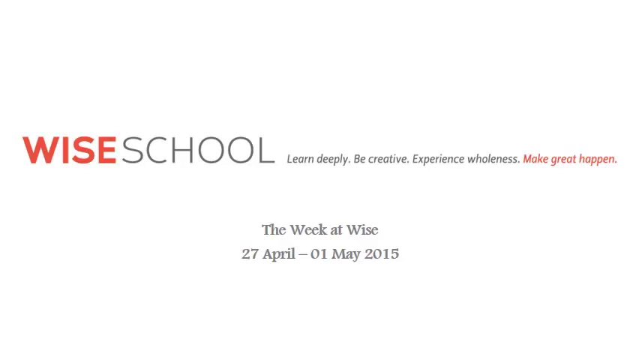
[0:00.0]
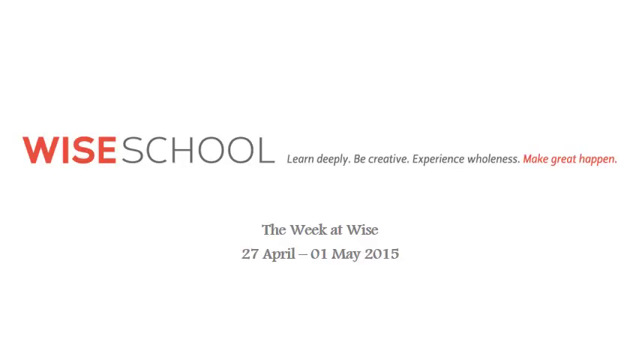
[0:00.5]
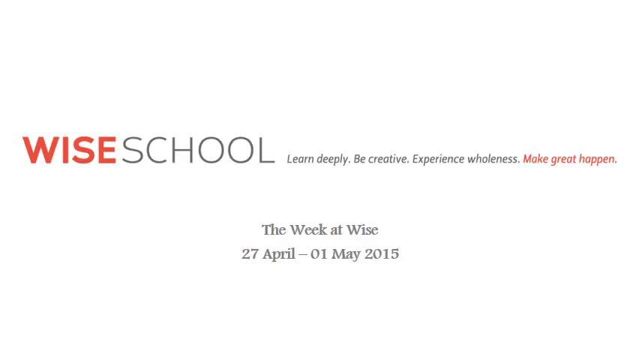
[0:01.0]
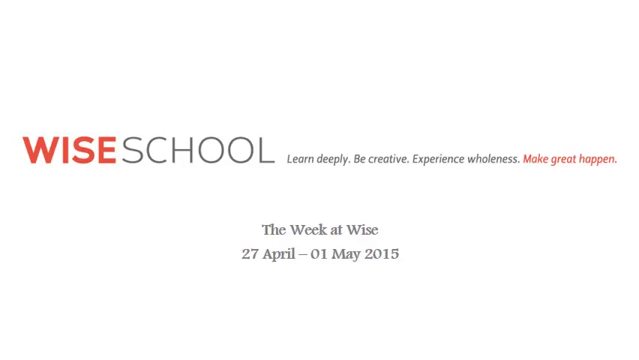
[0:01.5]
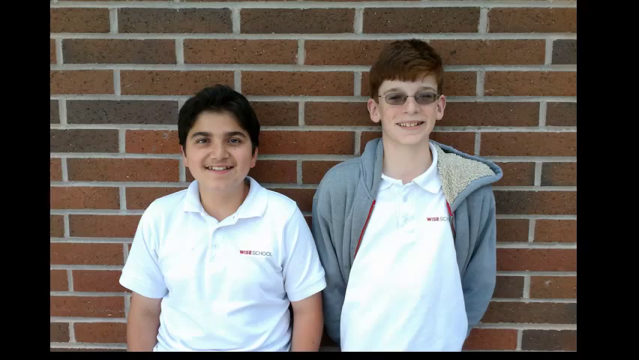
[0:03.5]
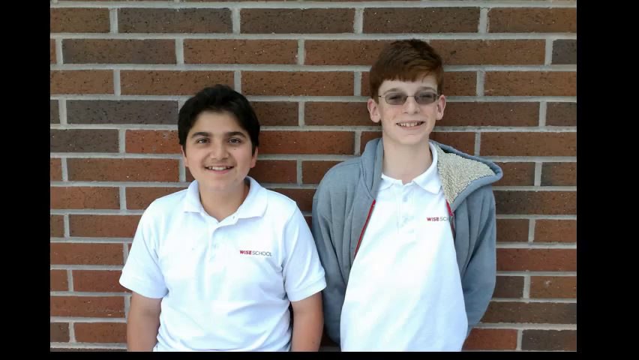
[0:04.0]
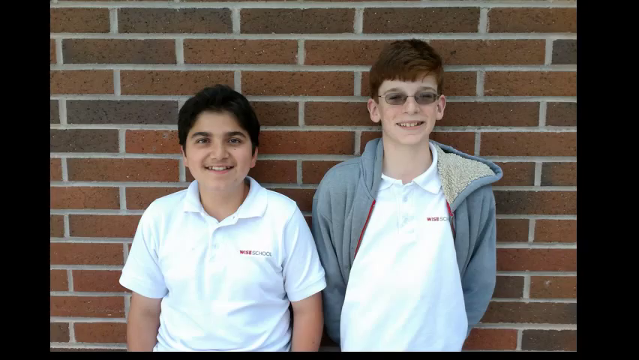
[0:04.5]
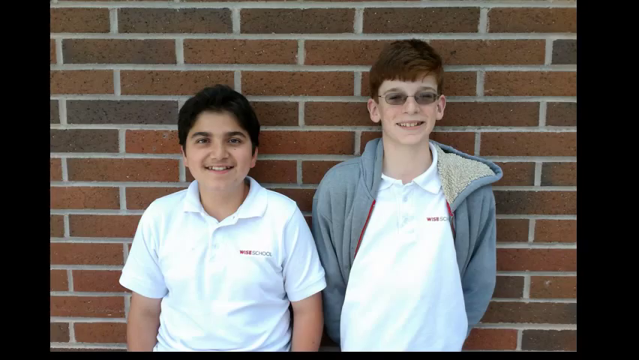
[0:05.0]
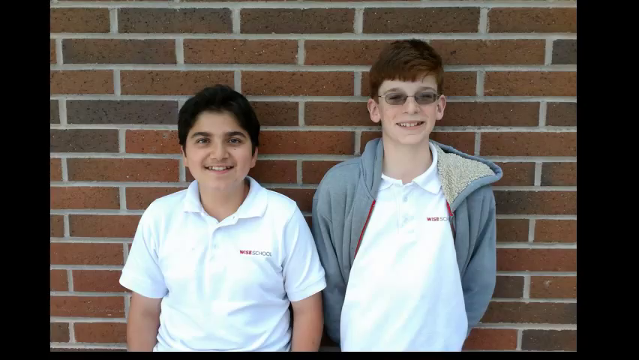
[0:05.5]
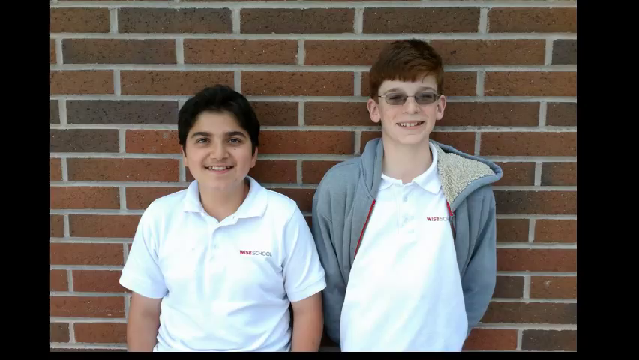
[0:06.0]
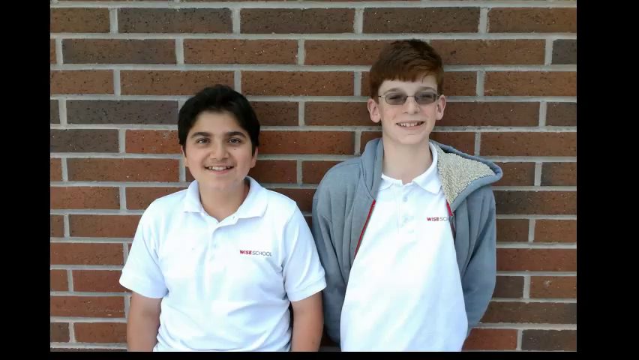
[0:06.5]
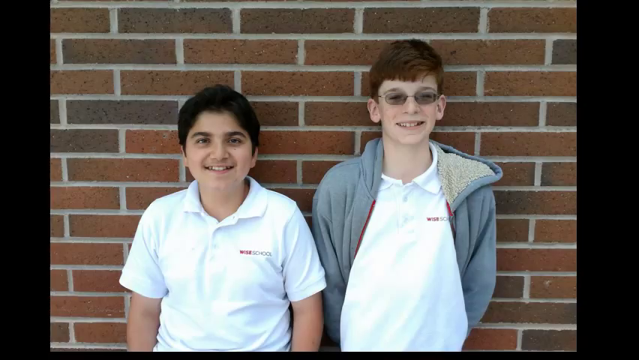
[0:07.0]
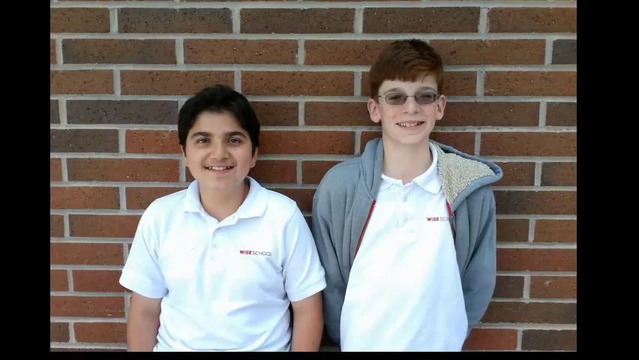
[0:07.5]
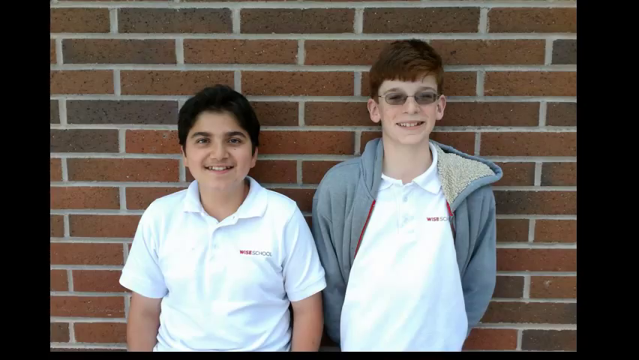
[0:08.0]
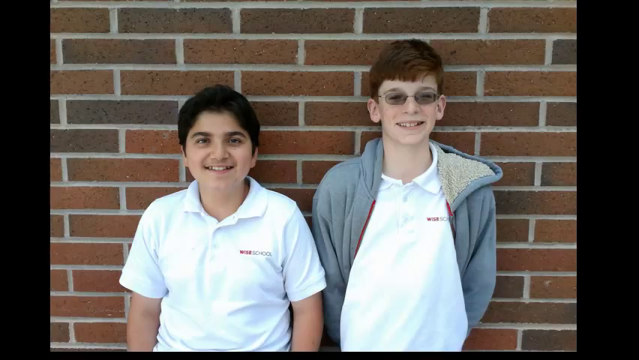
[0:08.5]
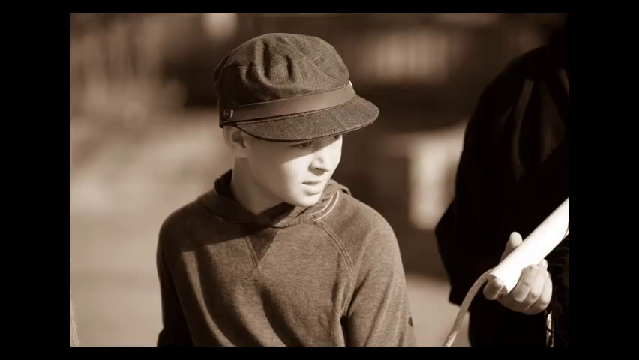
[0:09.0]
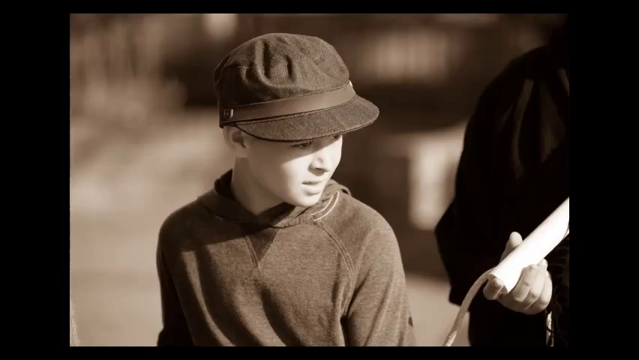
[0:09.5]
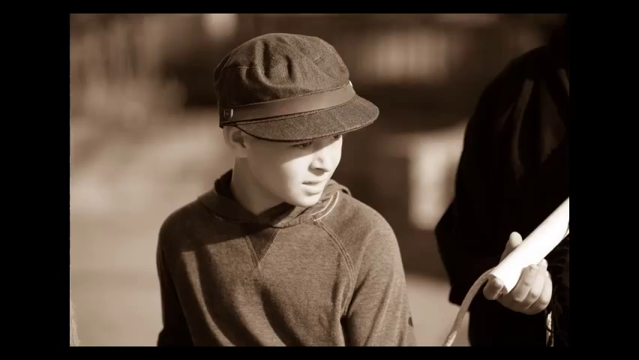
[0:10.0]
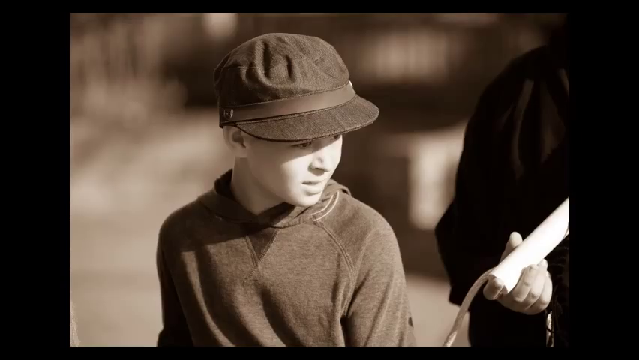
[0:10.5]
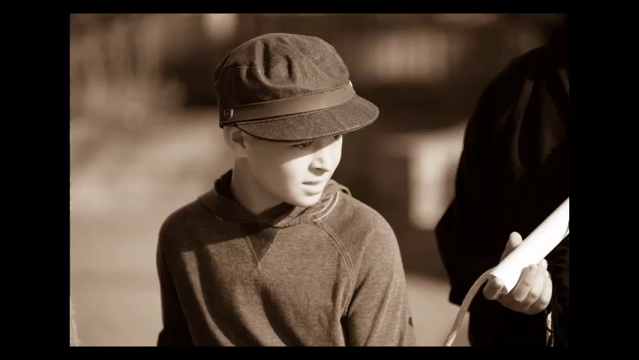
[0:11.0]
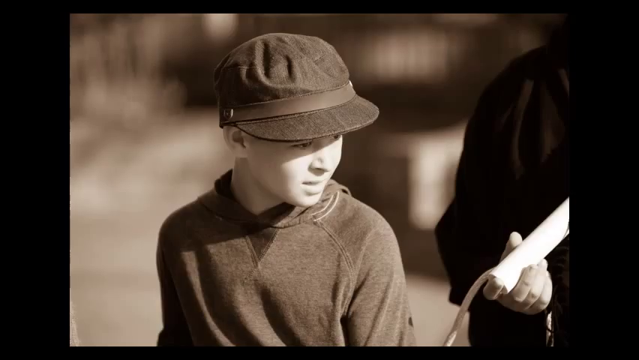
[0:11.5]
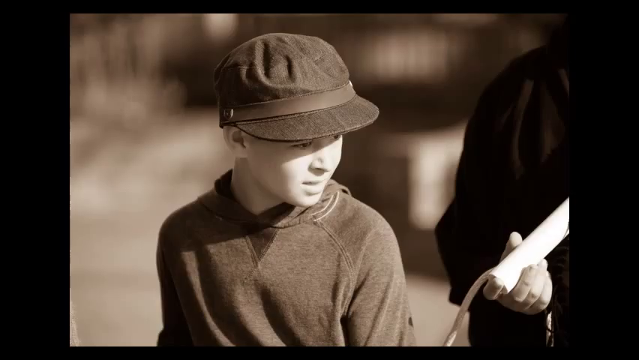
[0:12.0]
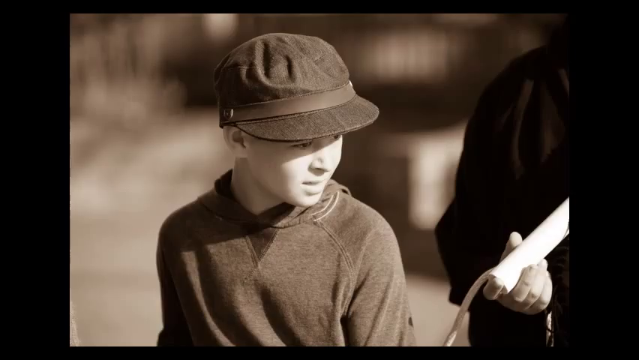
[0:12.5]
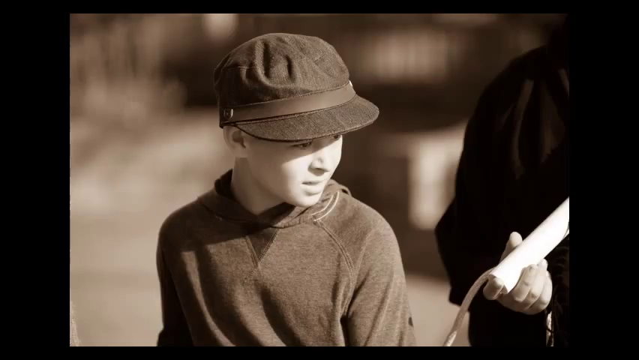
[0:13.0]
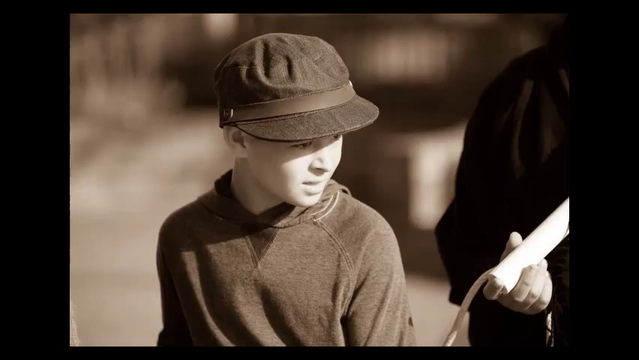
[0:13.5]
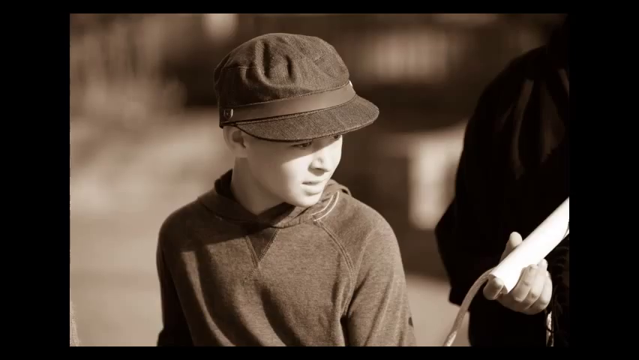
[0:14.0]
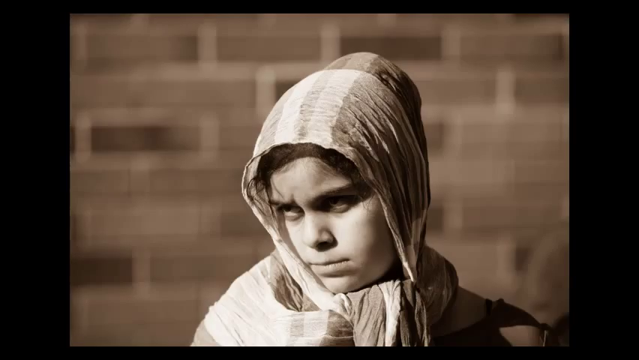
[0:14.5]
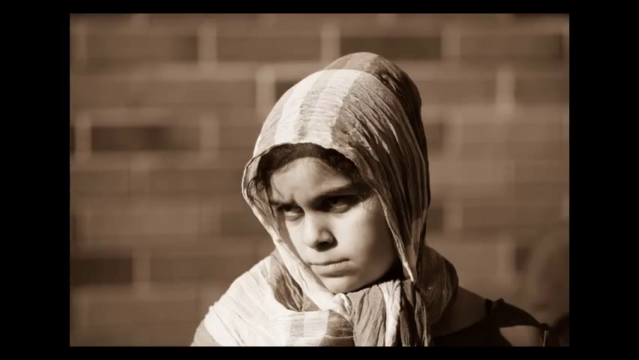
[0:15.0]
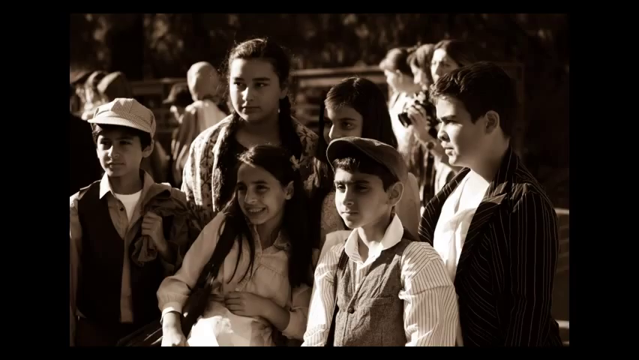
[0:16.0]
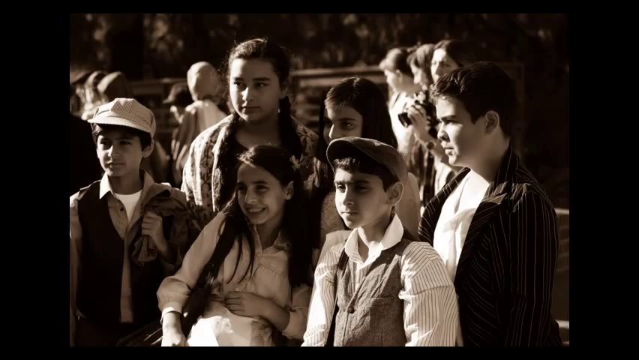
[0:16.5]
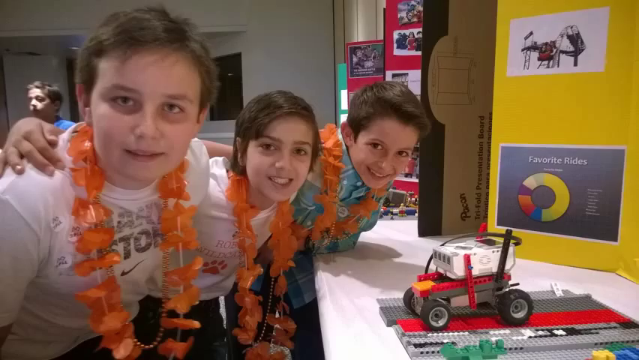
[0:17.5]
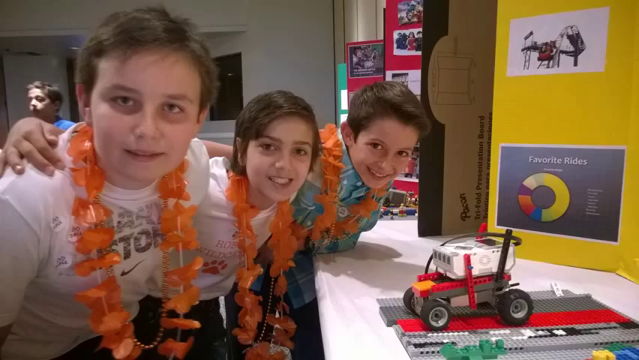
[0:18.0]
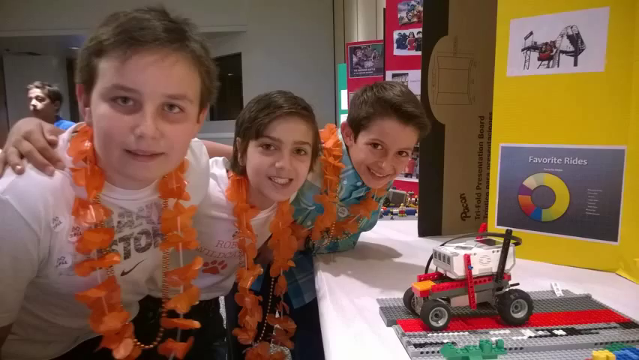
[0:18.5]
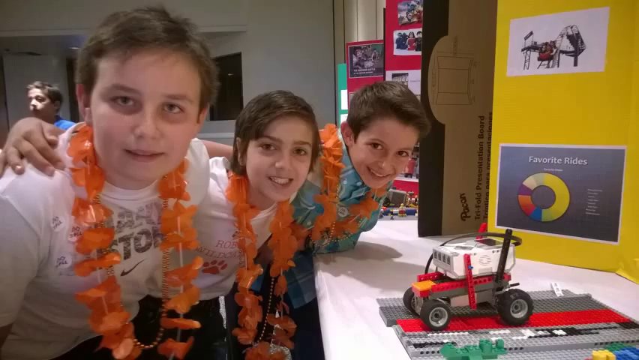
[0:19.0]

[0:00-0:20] The video is wider than it is tall. It opens on a white background with centered text. The text begins in red capital letters reading "WISE," followed by black capital letters reading "SCHOOL." To the right of that, in a much smaller font and no longer in all capitals, it reads "learn deeply, be creative, experience whole-ness." The text then turns red and reads "MAKE GREAT HAPPEN." Below that, after a gap, centered black text reads "THE WEEK AT WISE," and the next line reads "27 APRIL-01 MAY 2015." Next comes a static picture of two young boys, probably about 10, both in white polos with a logo on the left that is too zoomed out to make out. The boy on the right wears a black hoodie and sunglasses and has reddish brown hair; the boy on the left has black hair. They face the camera in front of a brick building. The video then moves to a static image, kind of black and white, of a young boy probably around 6.